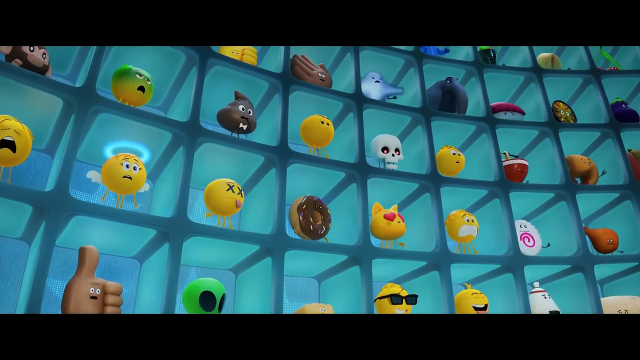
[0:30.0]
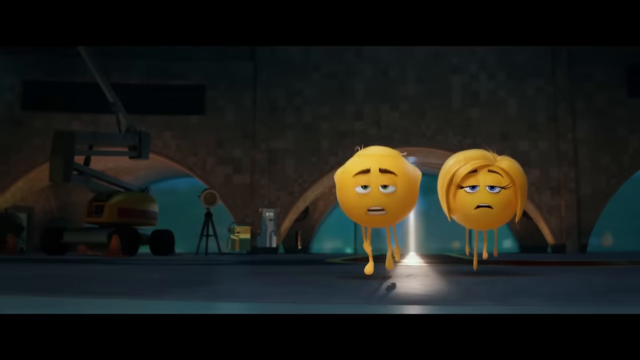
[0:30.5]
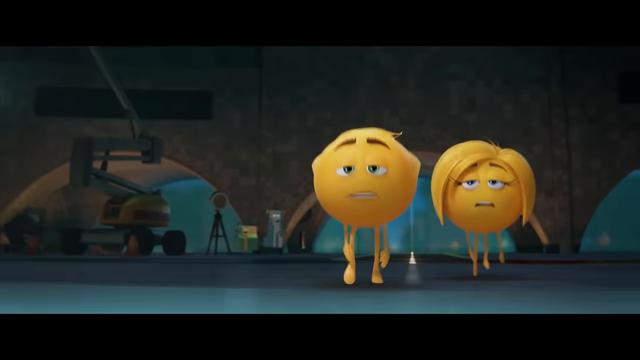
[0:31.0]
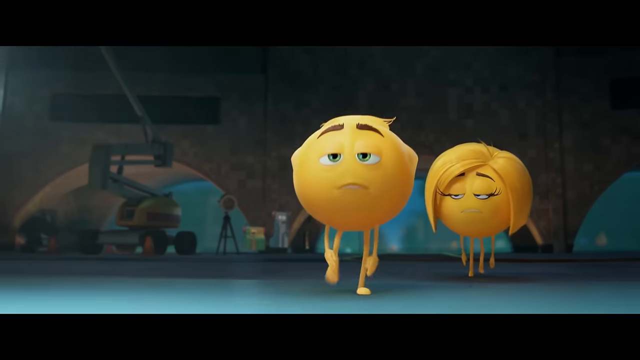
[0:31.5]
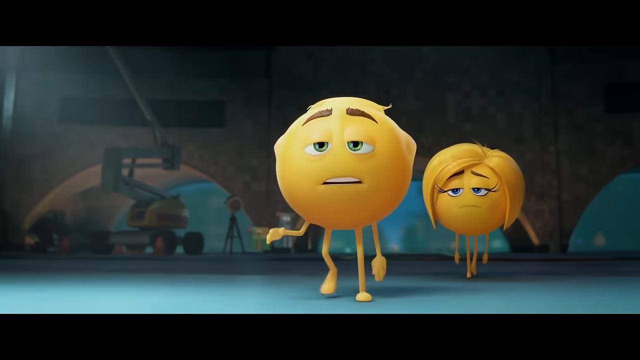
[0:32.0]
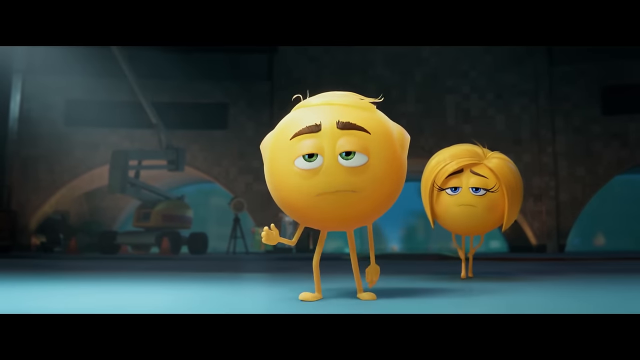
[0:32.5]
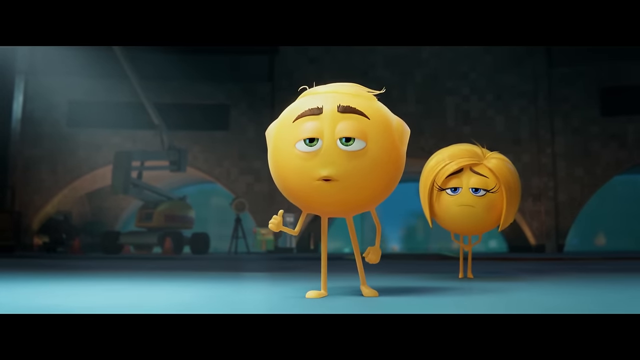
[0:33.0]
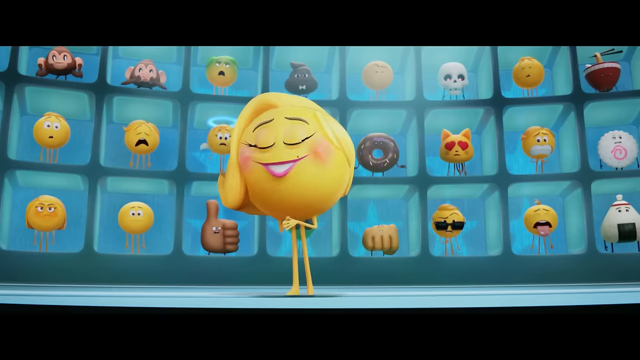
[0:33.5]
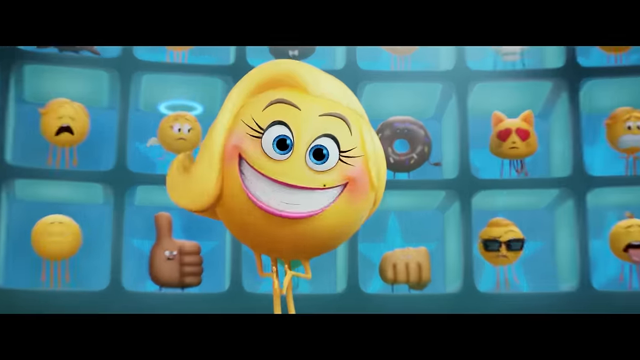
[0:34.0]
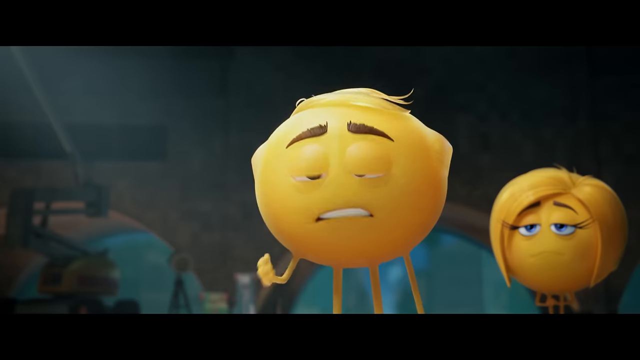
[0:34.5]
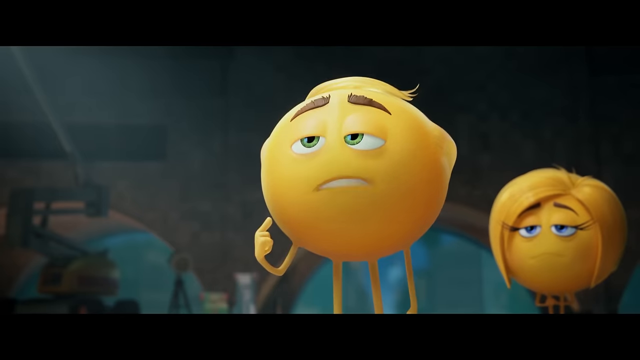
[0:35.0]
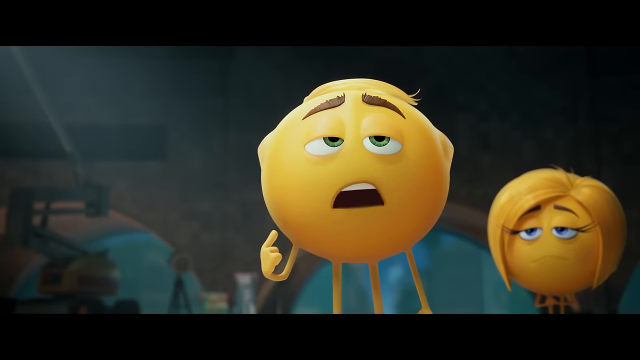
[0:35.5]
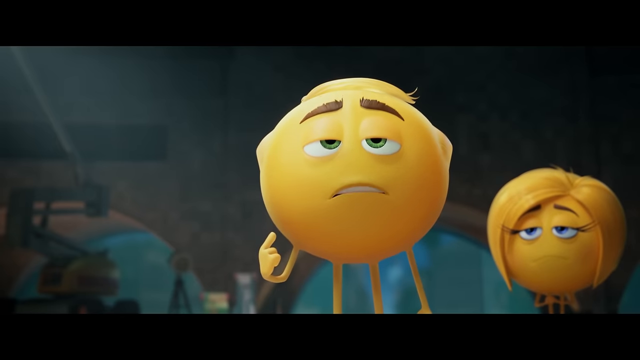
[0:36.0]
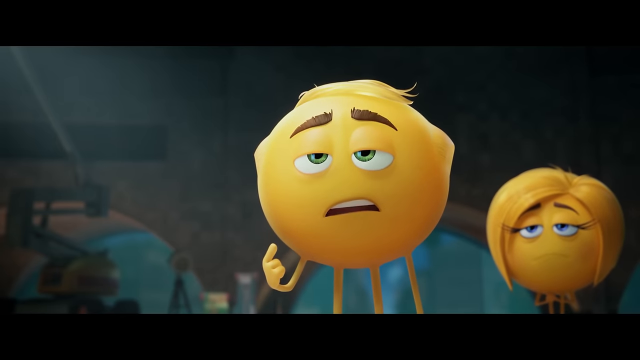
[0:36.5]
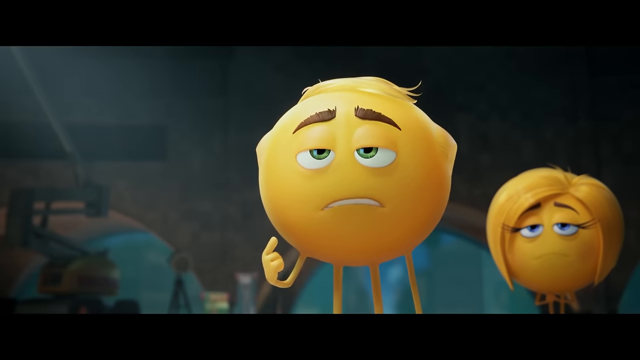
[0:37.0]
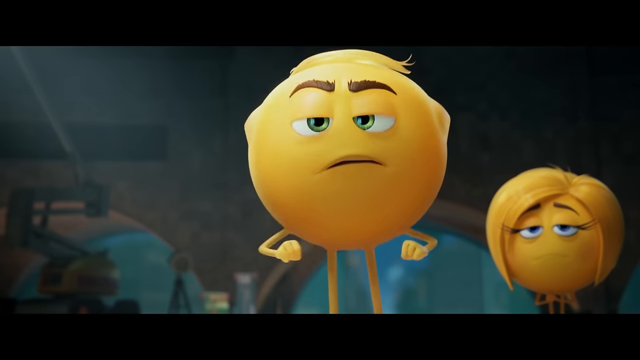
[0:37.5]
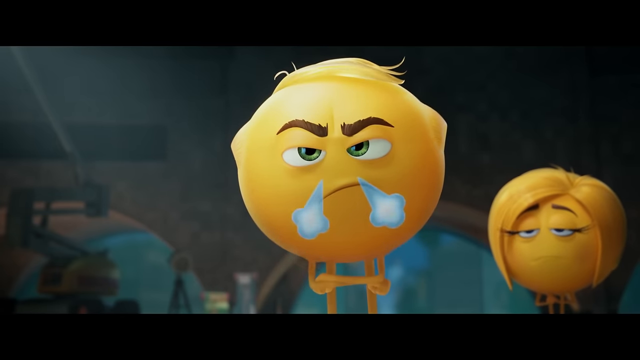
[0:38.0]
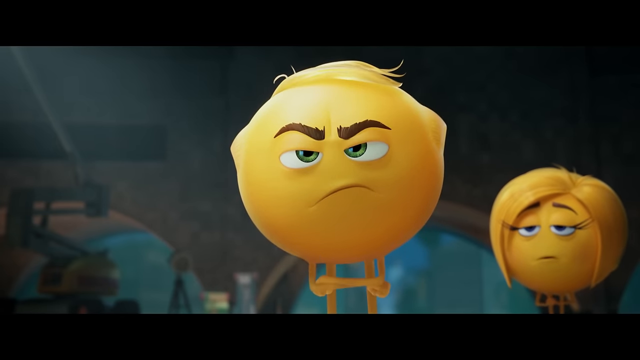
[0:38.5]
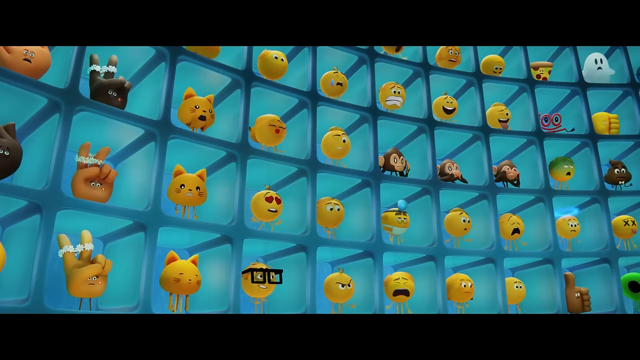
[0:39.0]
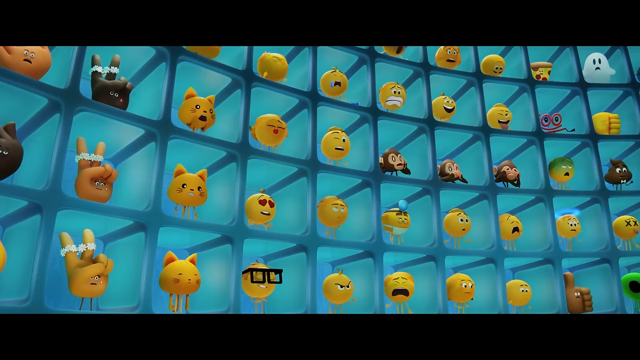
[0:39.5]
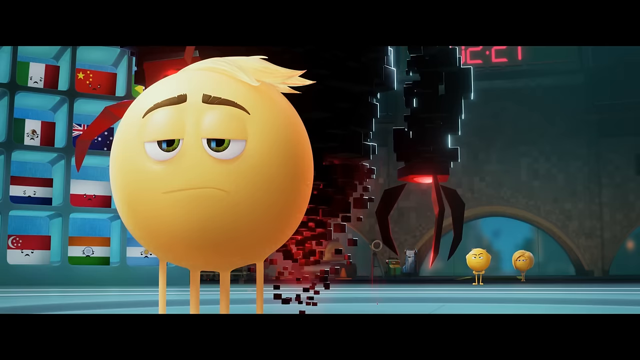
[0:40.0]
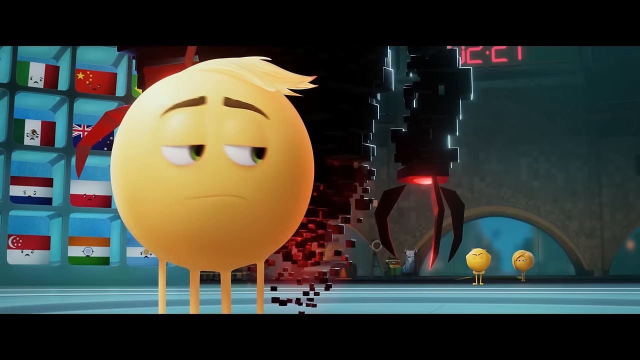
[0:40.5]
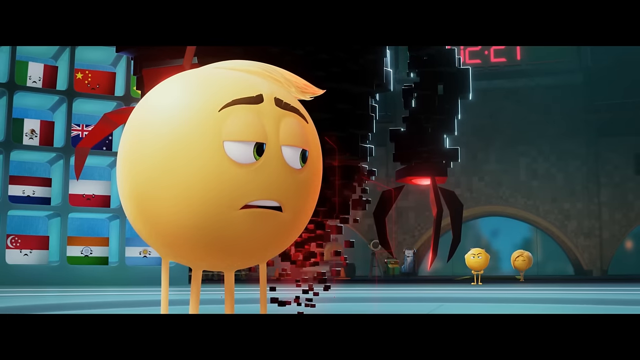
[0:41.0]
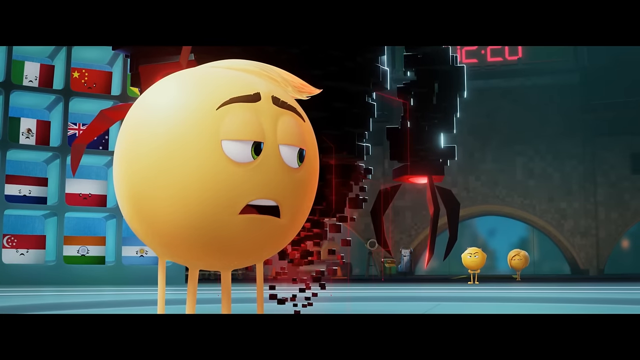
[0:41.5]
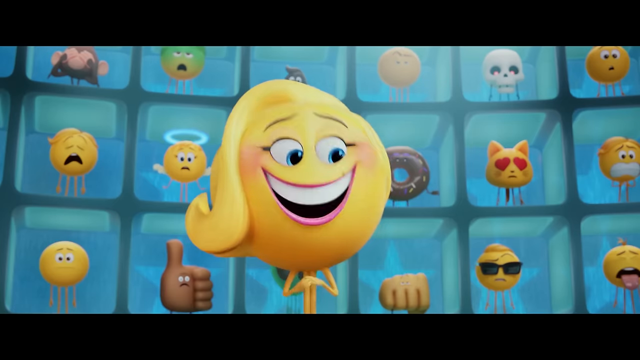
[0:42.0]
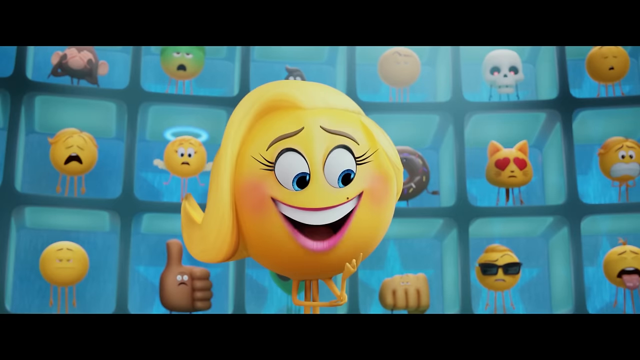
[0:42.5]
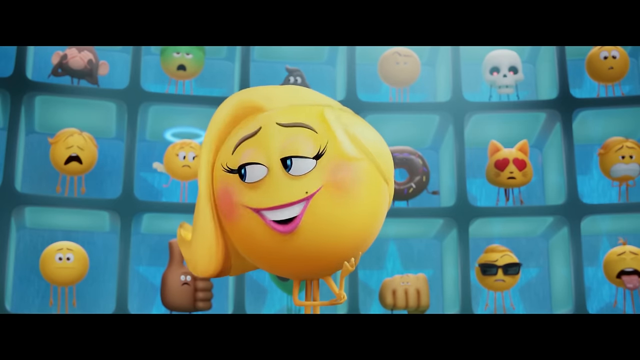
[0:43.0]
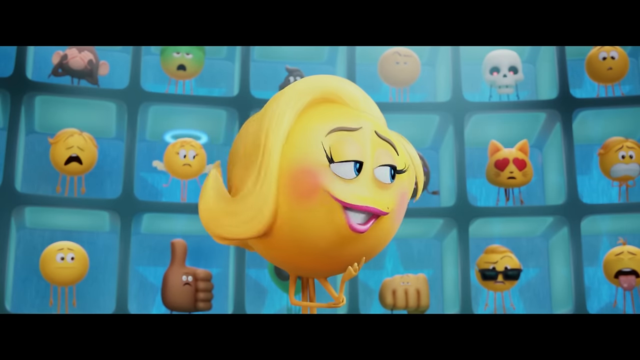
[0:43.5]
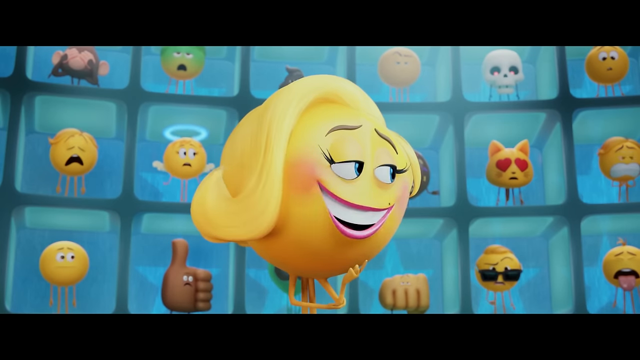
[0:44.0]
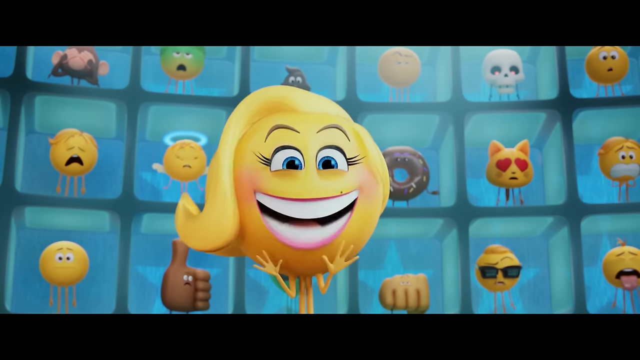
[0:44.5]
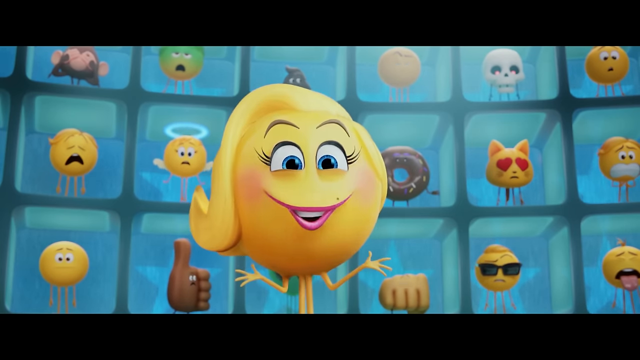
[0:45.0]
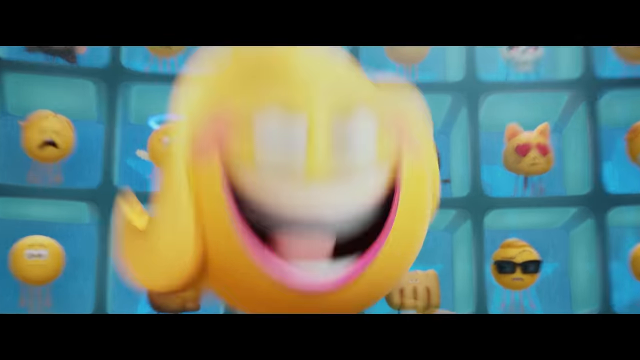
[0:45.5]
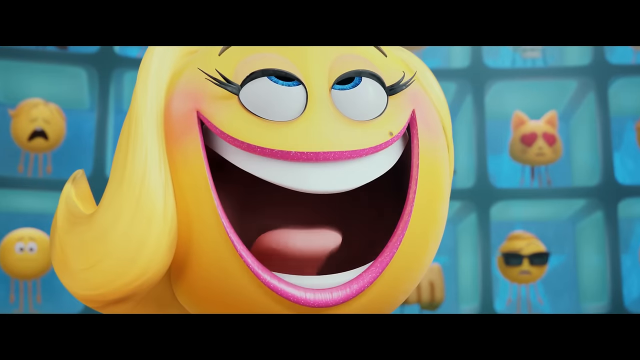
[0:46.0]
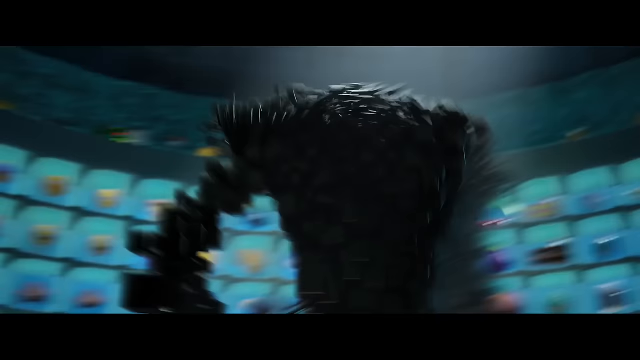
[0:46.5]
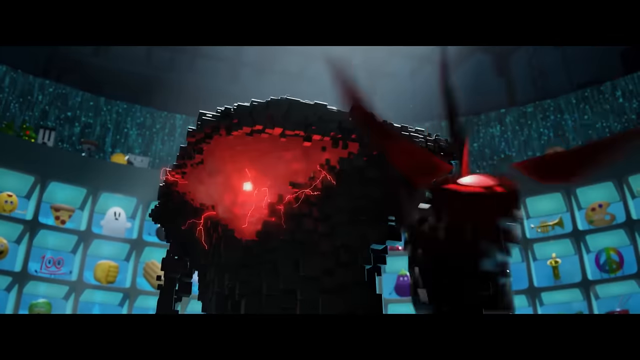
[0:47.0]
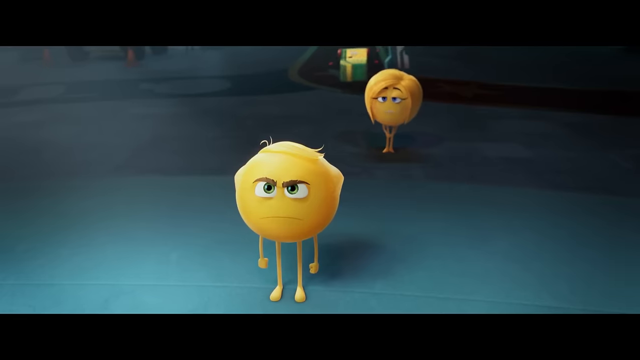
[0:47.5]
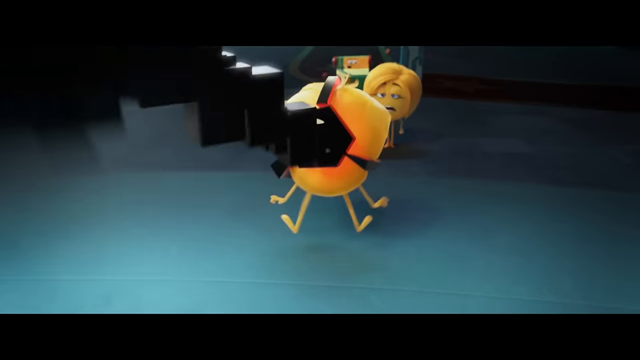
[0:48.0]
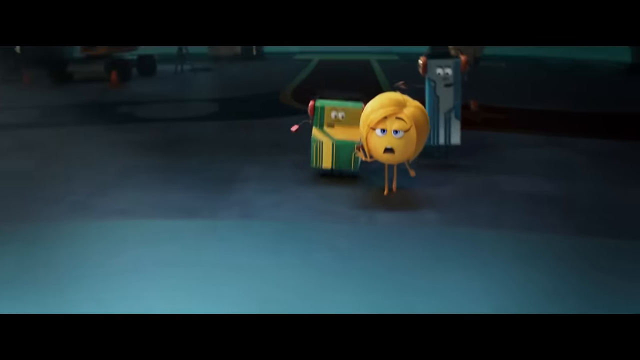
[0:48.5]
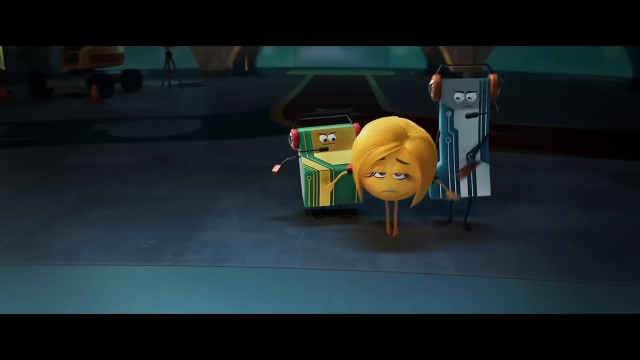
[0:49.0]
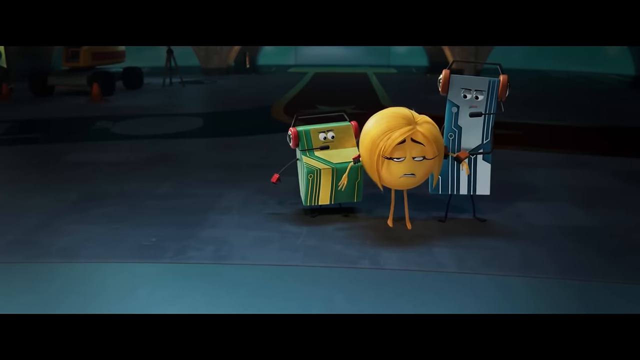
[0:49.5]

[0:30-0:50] The two emojis of the couple enter by the door. The first is an old man emoji, and the one on the right is a female emoji; both are yellow. They talk to Smiler, who is not taking in what they say. The old man appears to be furious about something. The emojis in the locked chambers show the expressions they represent: the laughing emoji is laughing, and there are crying, in love, curious and nerdy emojis, thumbs up and peace sign emojis, in different colors. A white ghost emoji is at the top right of the chambers. Smiler wears red lipstick, and she talks while commanding the robot to attack the old man emoji on the right side. Two robot machines approach the female emoji who was walking with the old man and hold her in place.